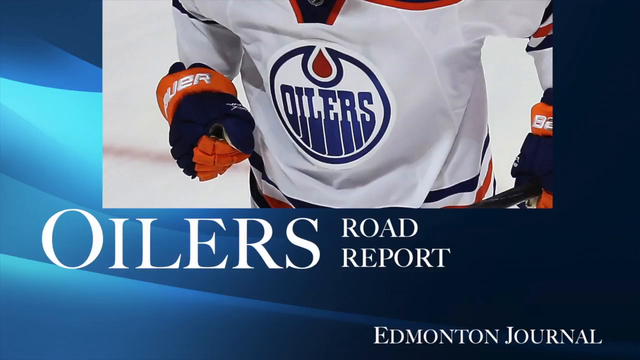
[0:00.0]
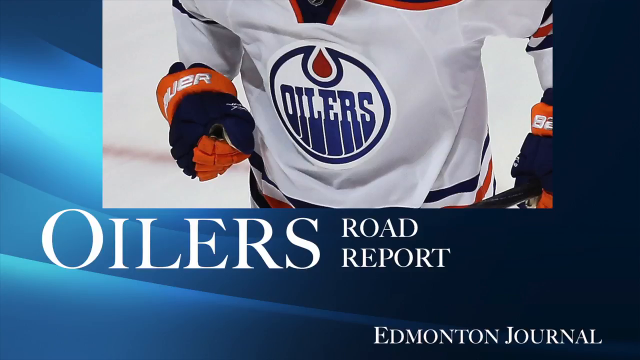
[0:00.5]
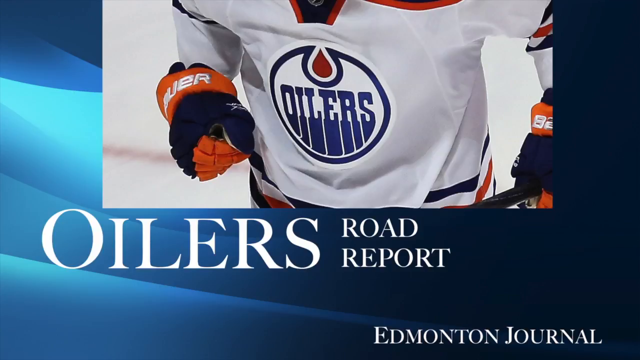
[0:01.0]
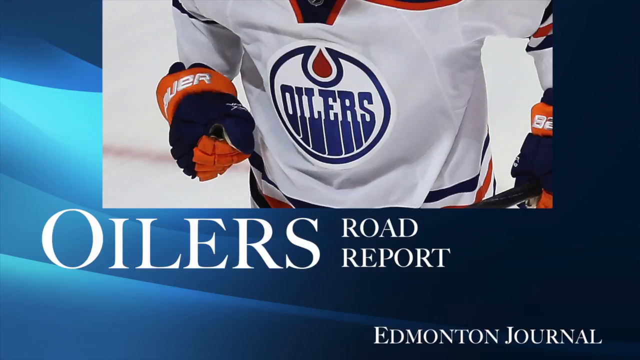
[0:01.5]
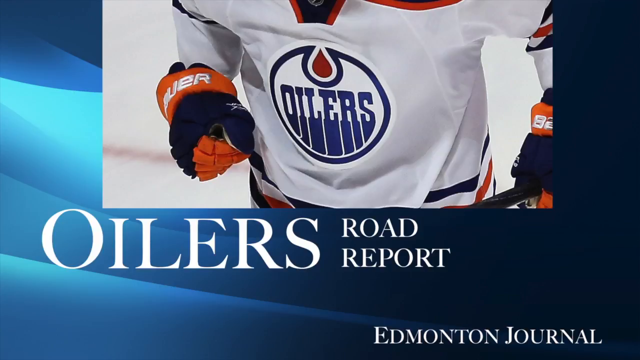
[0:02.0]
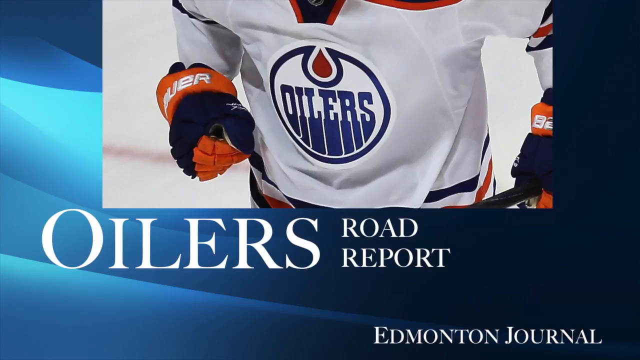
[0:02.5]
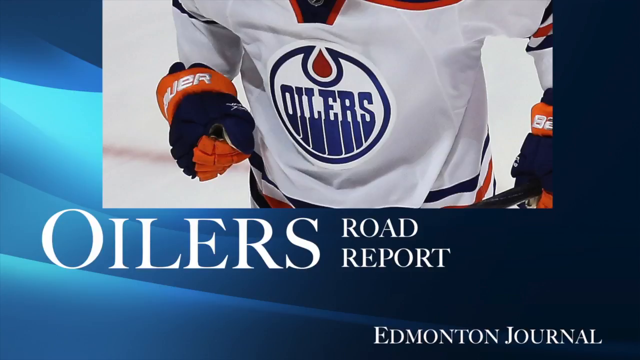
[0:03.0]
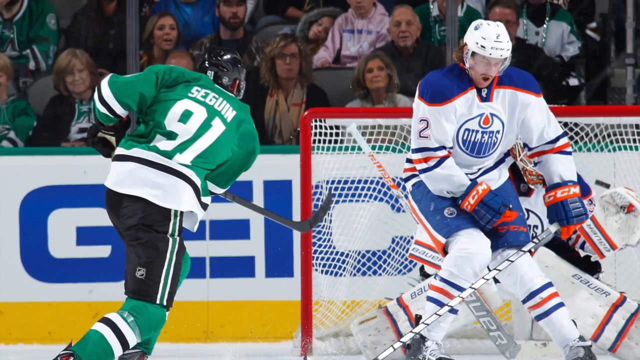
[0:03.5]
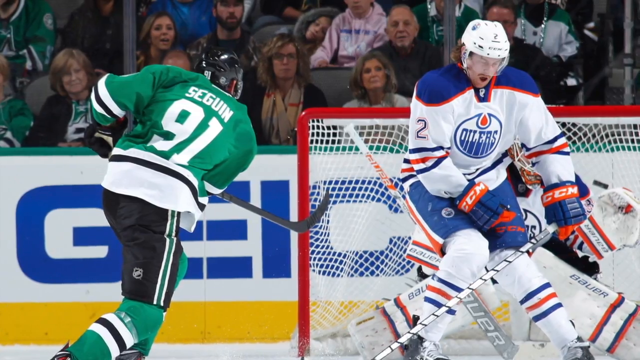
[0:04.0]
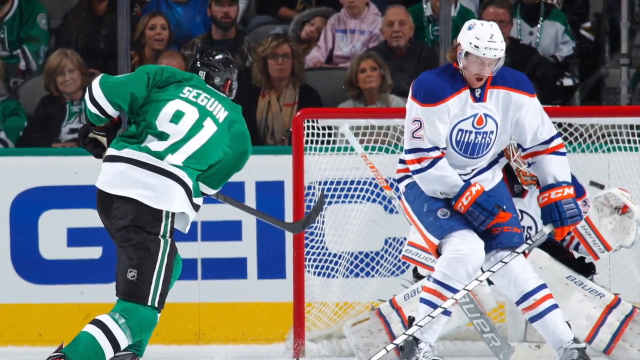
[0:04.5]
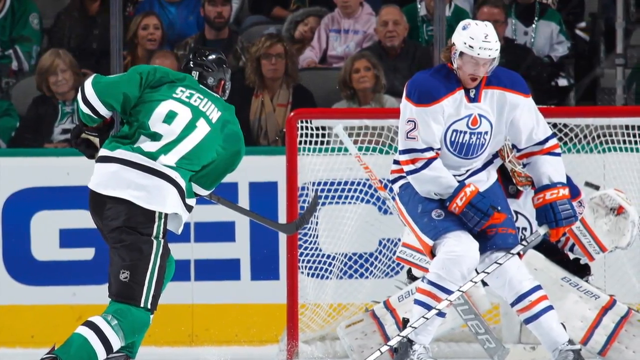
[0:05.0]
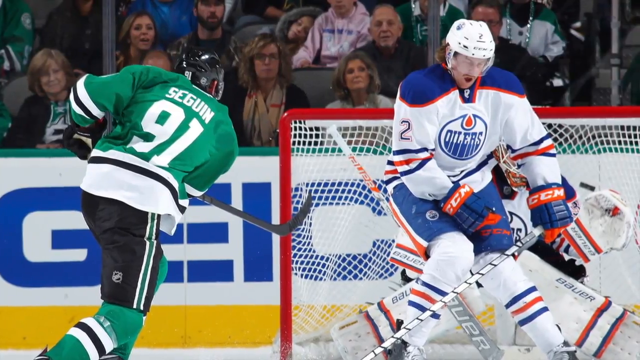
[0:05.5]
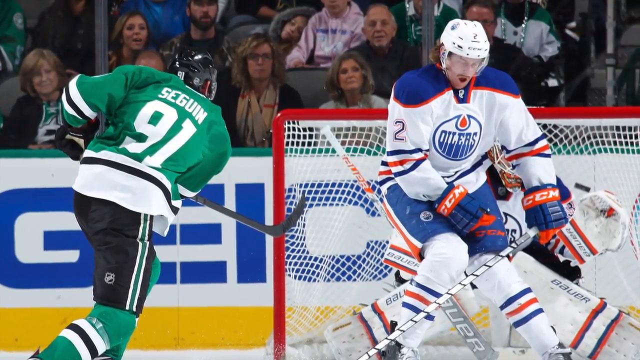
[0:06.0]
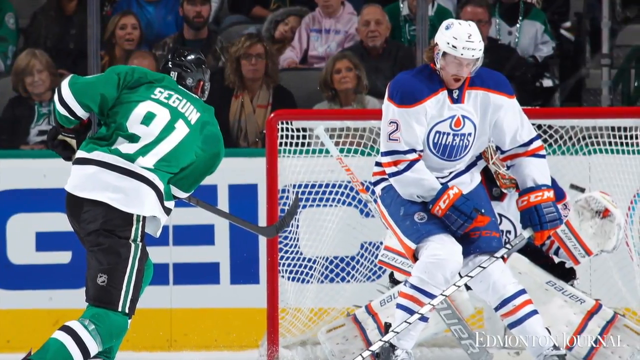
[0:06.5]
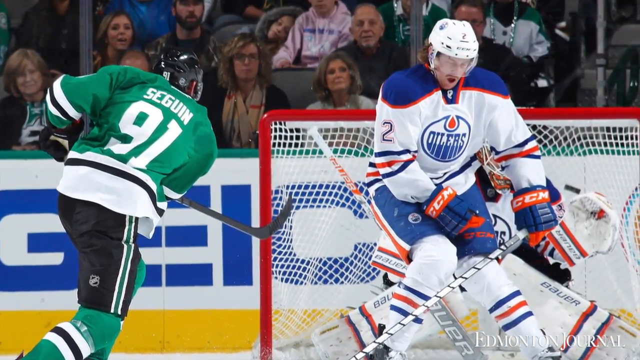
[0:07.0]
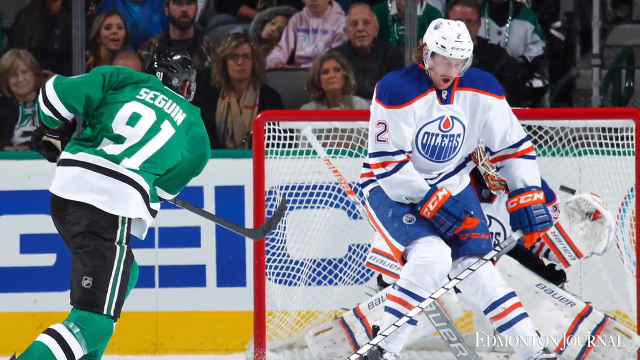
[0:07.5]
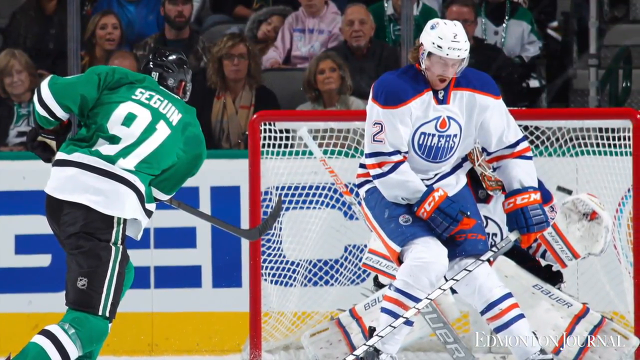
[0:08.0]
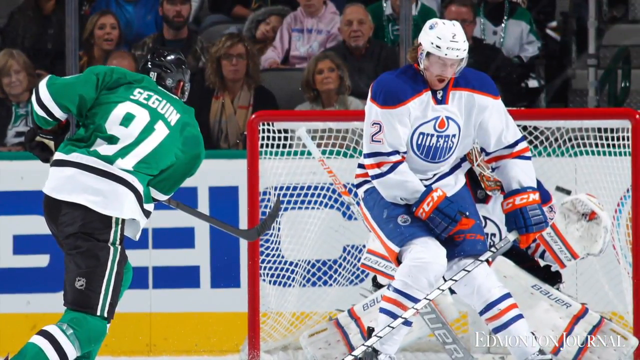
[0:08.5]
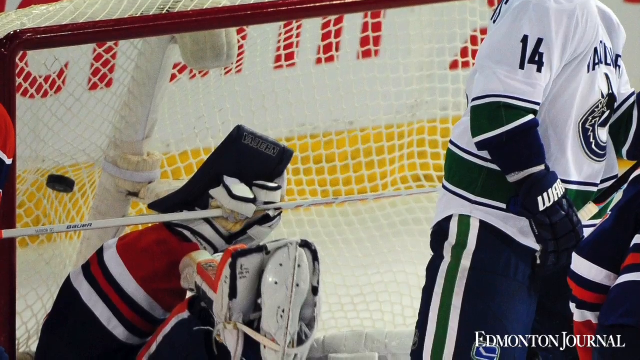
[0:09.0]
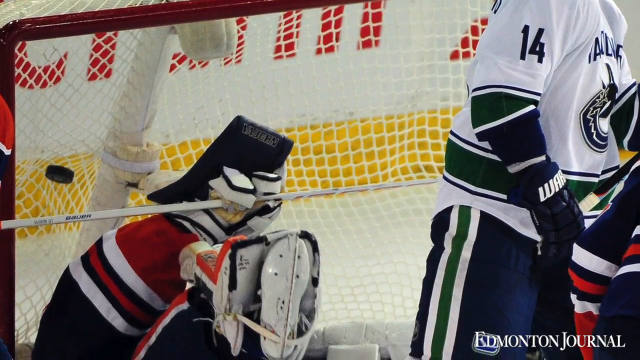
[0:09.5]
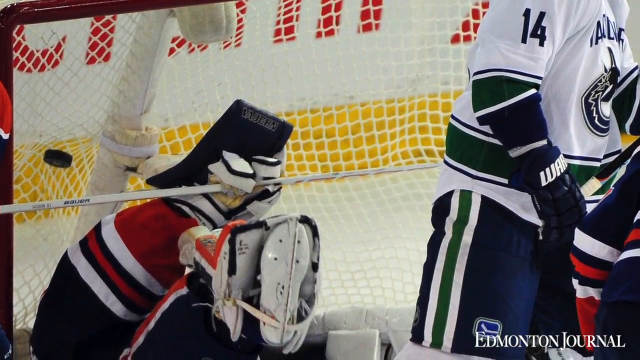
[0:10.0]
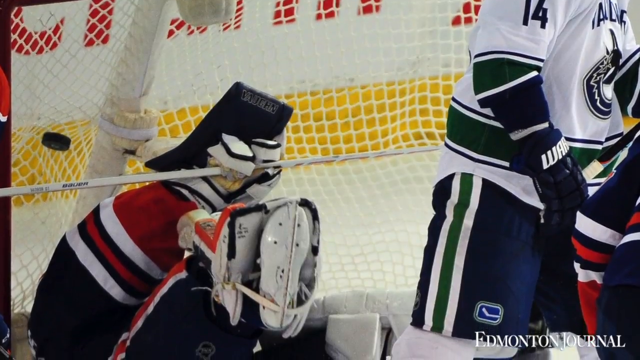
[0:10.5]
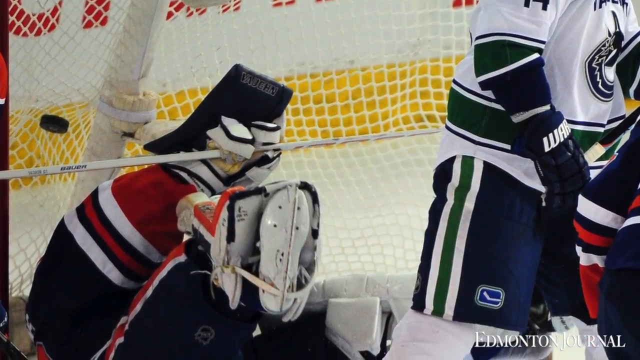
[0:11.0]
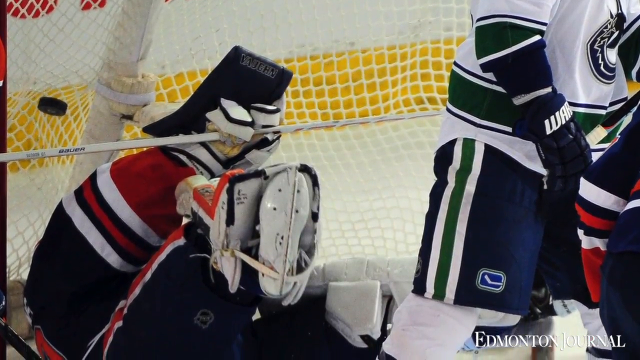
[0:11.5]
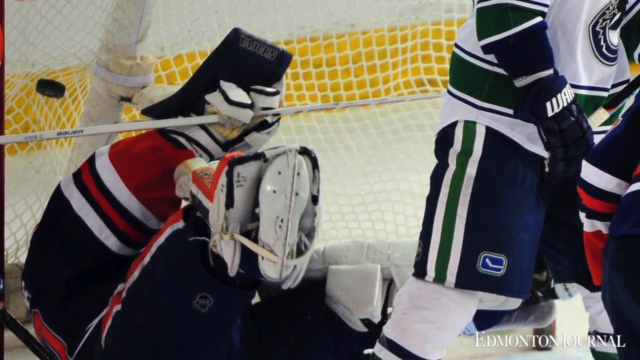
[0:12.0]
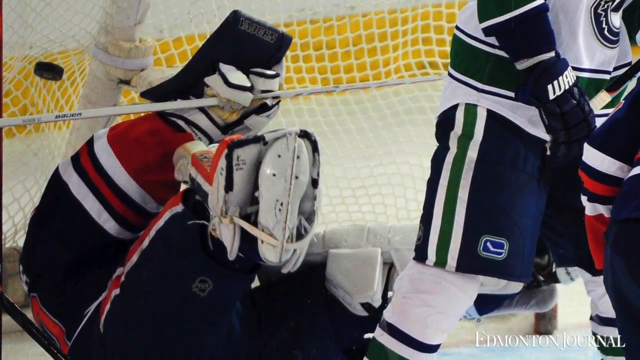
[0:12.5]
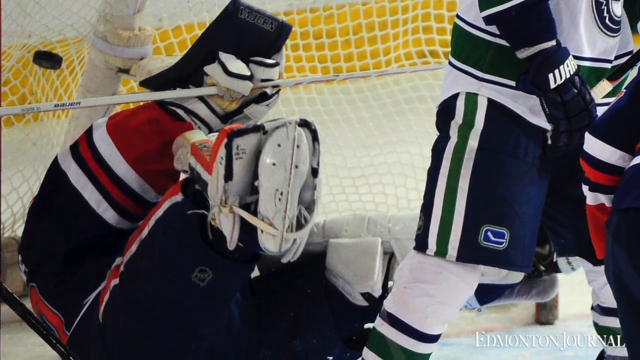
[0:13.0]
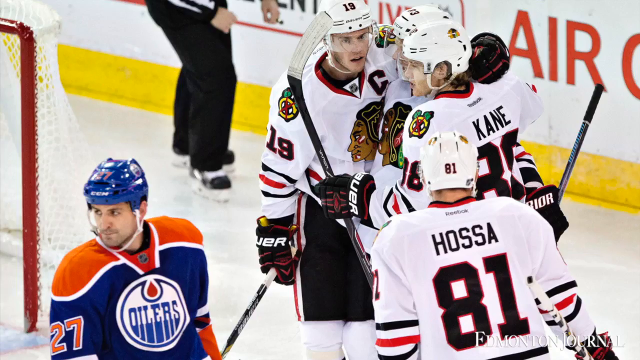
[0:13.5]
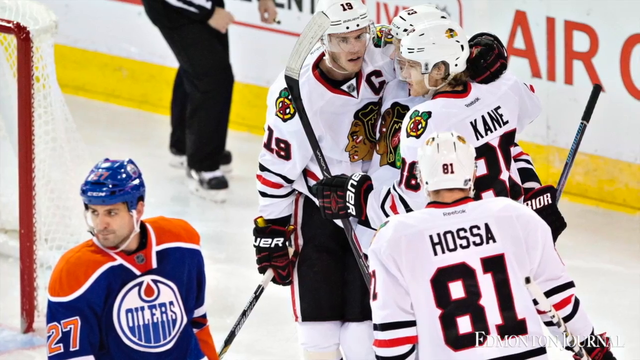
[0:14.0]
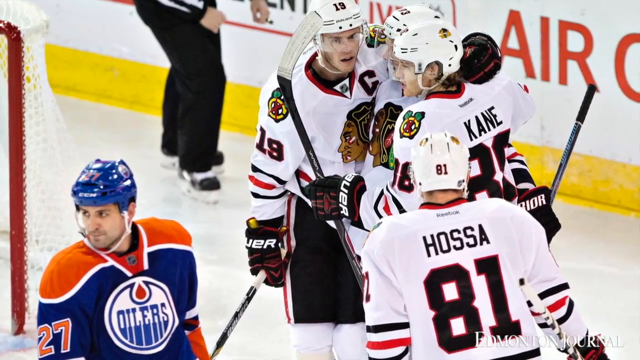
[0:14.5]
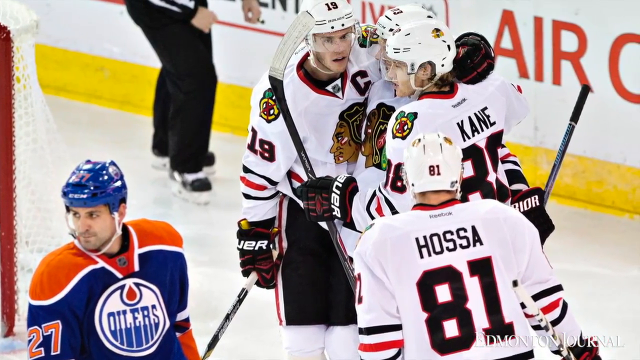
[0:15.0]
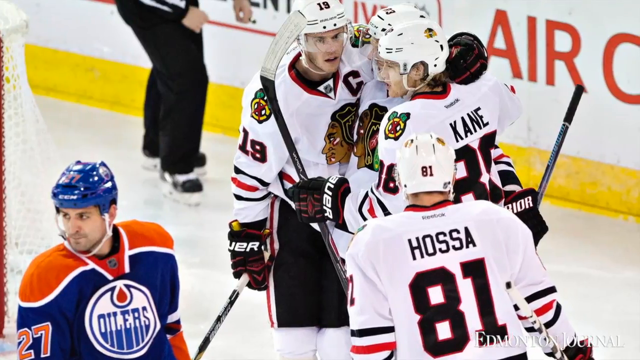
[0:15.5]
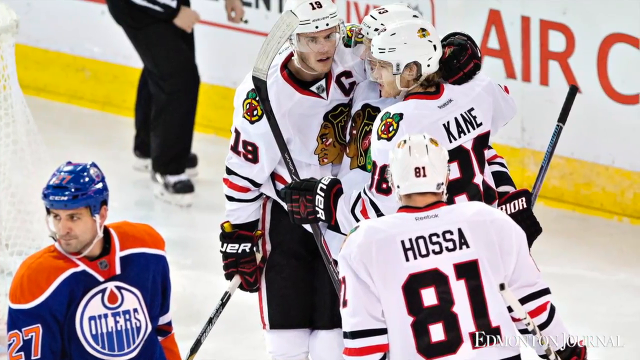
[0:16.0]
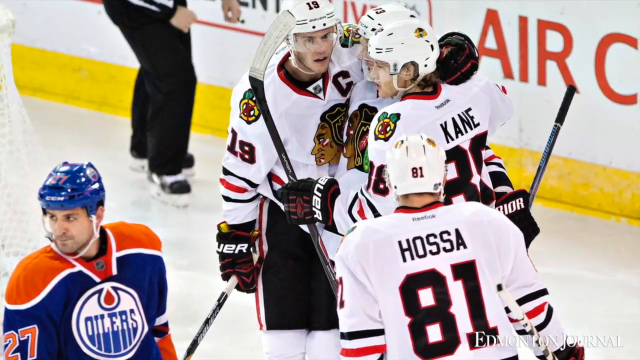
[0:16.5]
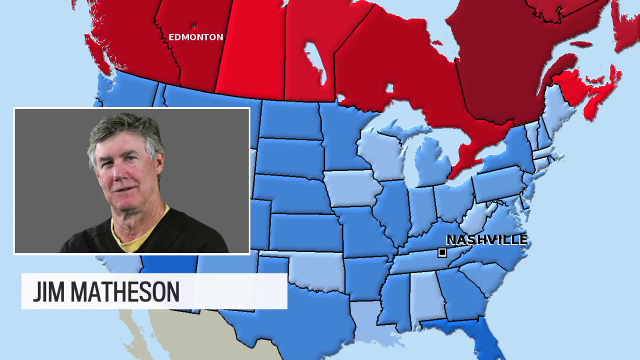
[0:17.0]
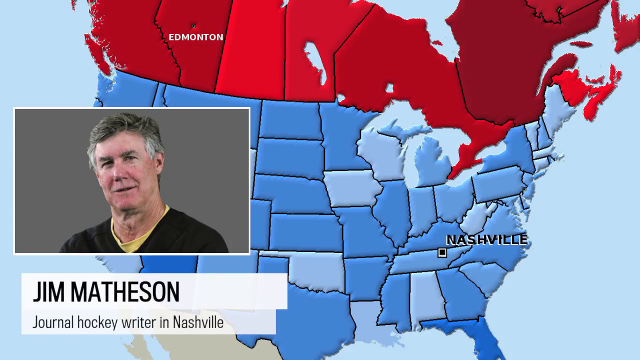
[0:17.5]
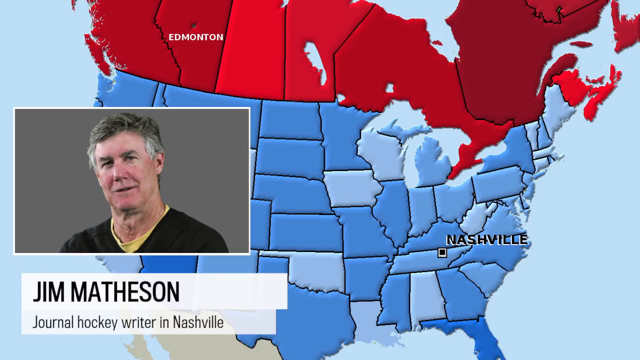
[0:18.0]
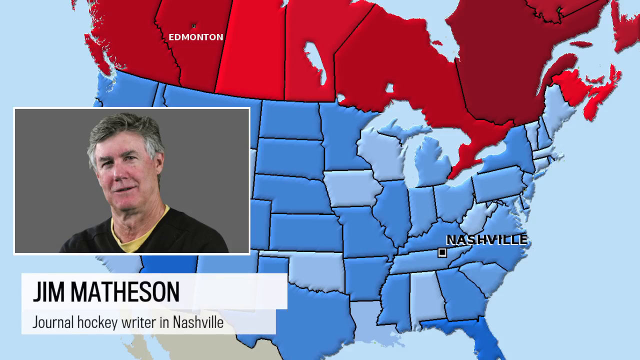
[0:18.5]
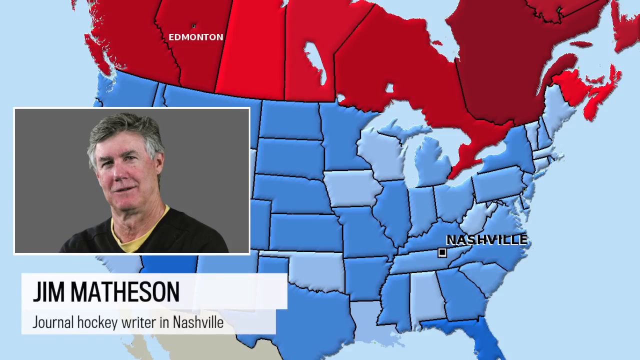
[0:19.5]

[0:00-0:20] At the top is an image of an NHL player, showing the middle of his body: mostly his jersey and the two gloves on his hands, with his left hand holding a hockey stick. The team is the Oilers, and the jersey is mostly white with a little dark blue and orange on the bottom, the sides and the upper areas. At the bottom of the picture, text reads "Oilers Road Report", and in the bottom right corner it says "Edmonton Journal". The background is light blue and dark blue. The scene changes to a still image of a hockey play. A player on the left appears to have swung his stick in an attempt to score a goal. The goalpost is on the right side, and in front of it are a goalie and another player, both Oilers. The player standing looks like he is blocking the shot with his legs; he has both knees together, is looking downward with his mouth open, and wears number two for the Oilers. Behind him the goalie is slightly visible, sticking out his glove on the right side. In the background, people behind the glass watch the game. The scene changes to another view of a hockey player on the ground: the goalie lies on the ice on the left side, and to the right appears to be an Oilers player. Next comes a still image with four teammates on the right and an Oilers player on the left. The Oilers player on the left, in a blue and orange jersey, looks to the left. The four players on the right wear white jerseys with a symbol of an Indian on their chests. In the upper left of the background is an official, a referee, wearing black pants, with the right sleeve of a black and white uniform slightly visible. Then a picture of a man named Jim Matheson appears on the left side.